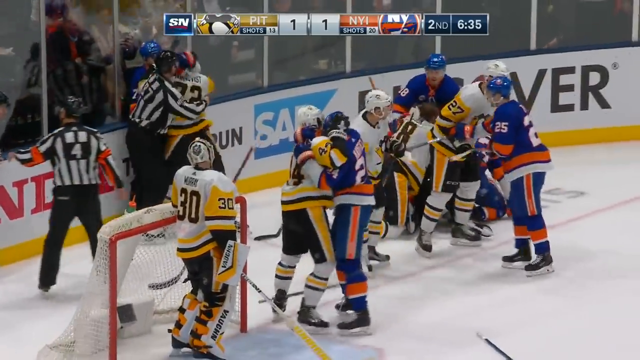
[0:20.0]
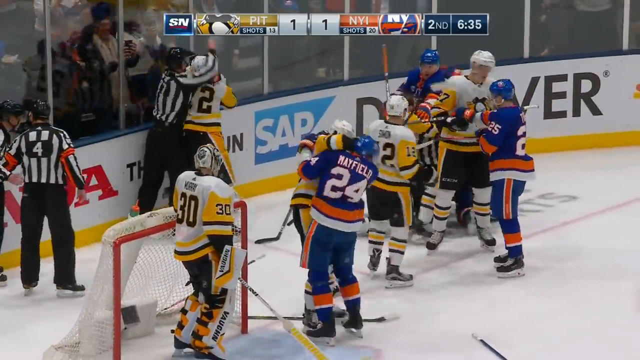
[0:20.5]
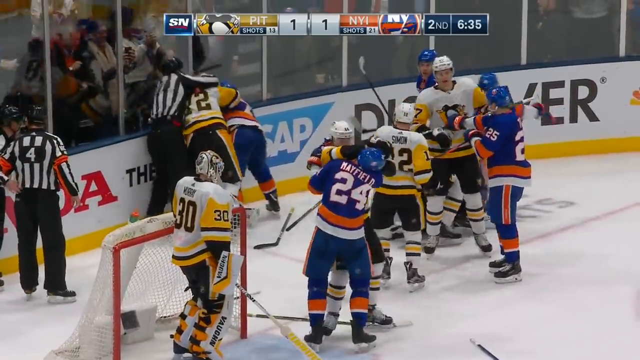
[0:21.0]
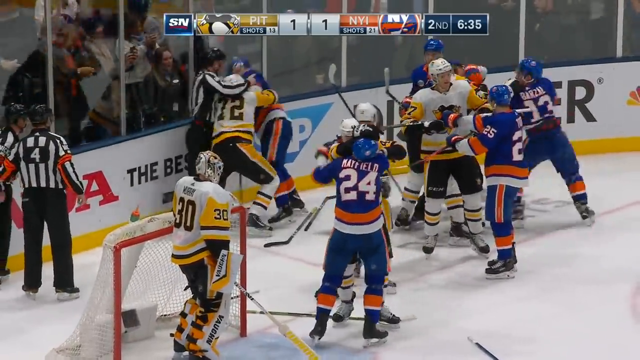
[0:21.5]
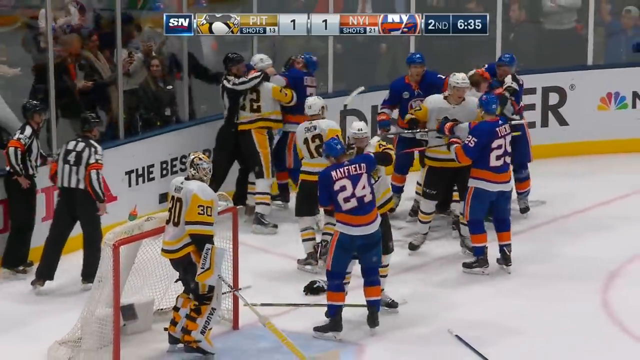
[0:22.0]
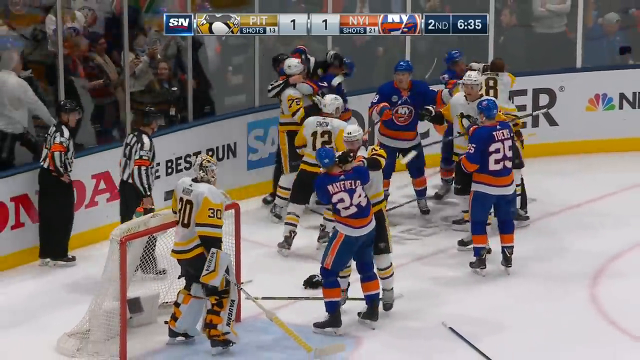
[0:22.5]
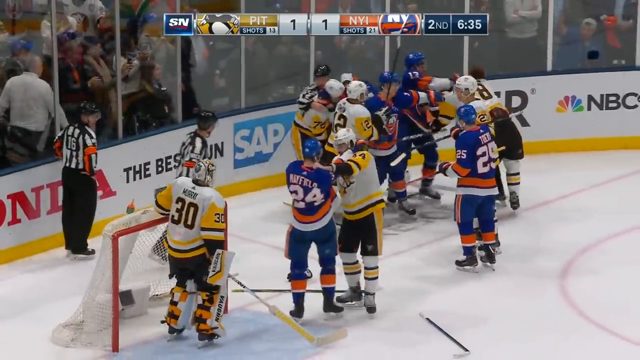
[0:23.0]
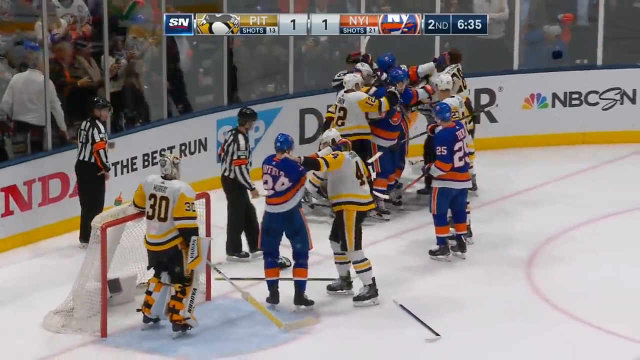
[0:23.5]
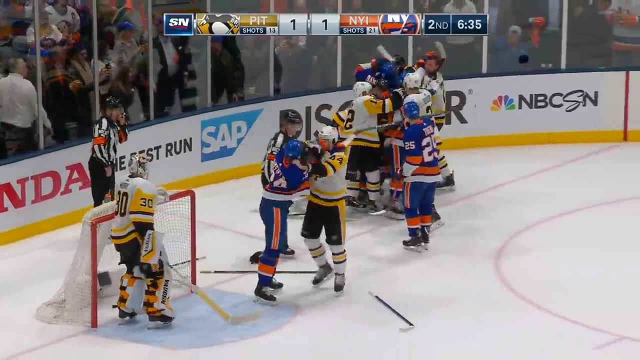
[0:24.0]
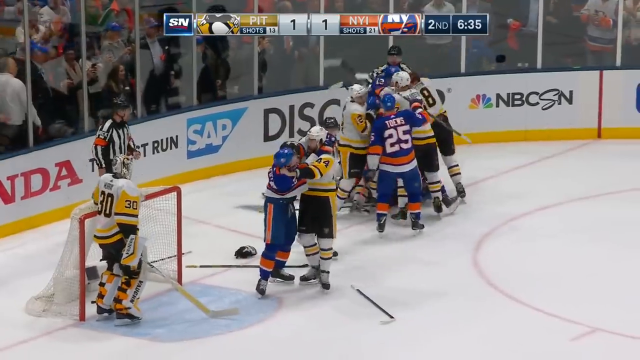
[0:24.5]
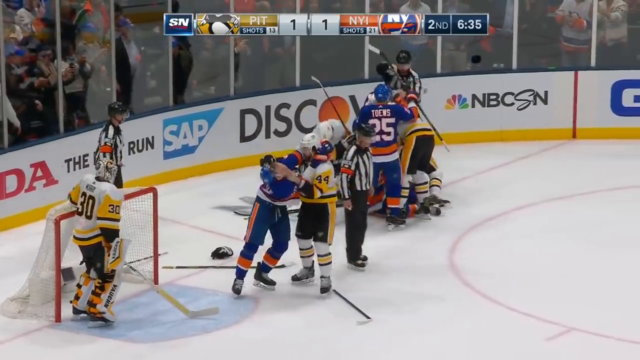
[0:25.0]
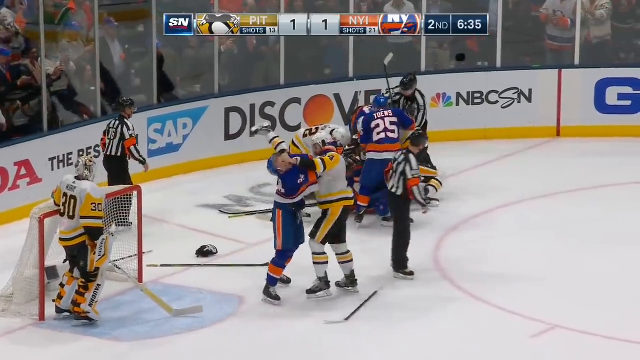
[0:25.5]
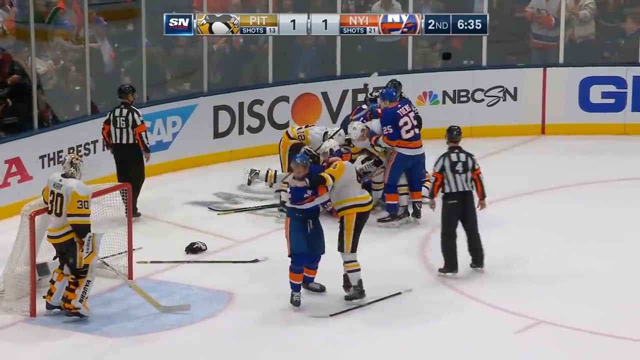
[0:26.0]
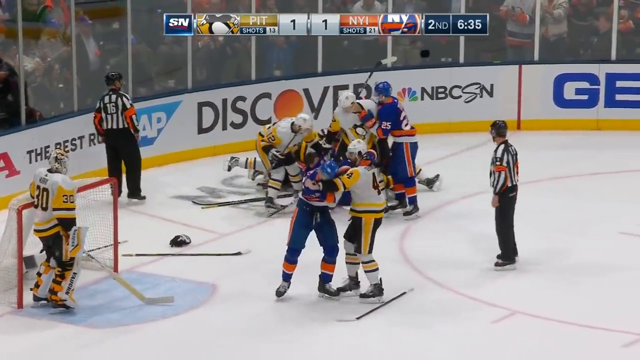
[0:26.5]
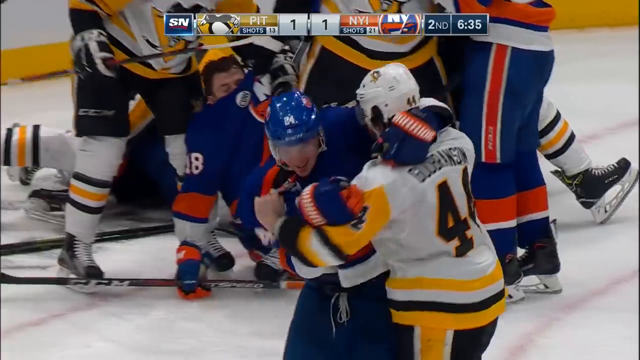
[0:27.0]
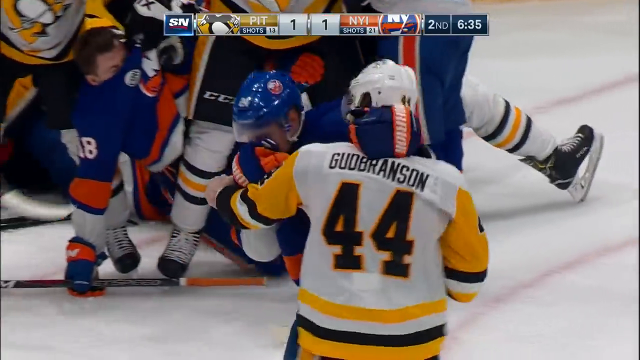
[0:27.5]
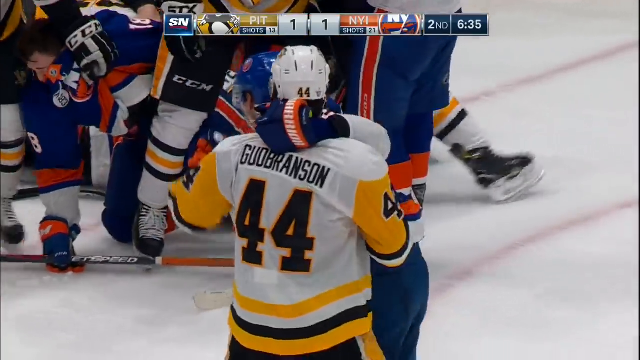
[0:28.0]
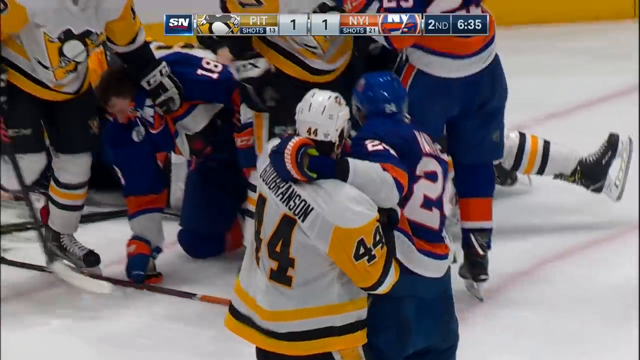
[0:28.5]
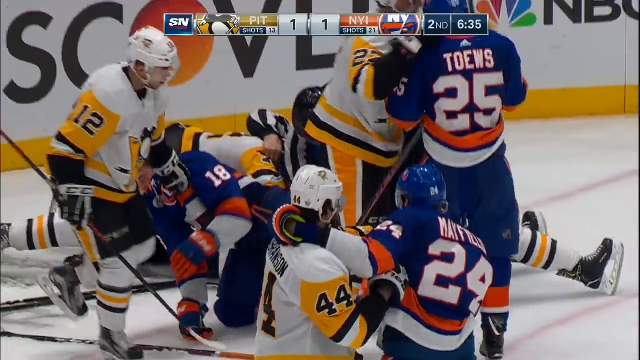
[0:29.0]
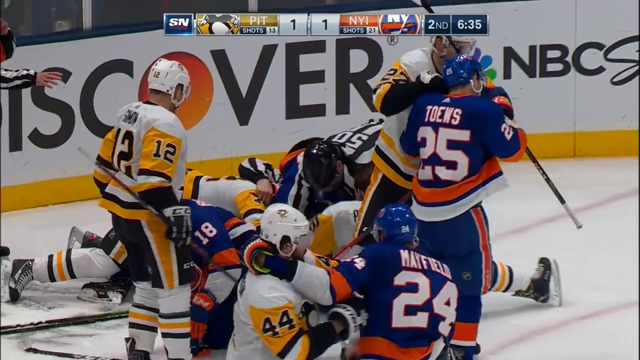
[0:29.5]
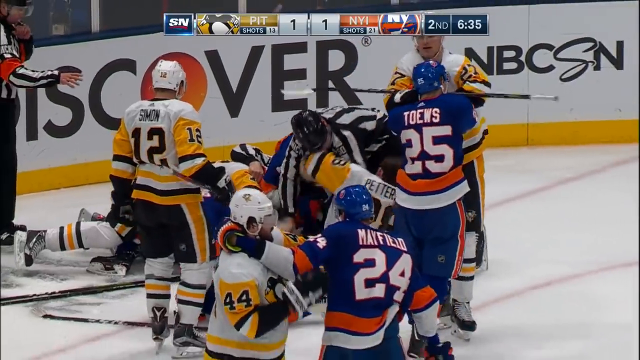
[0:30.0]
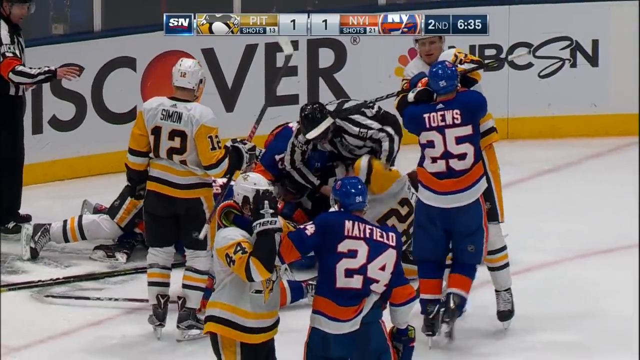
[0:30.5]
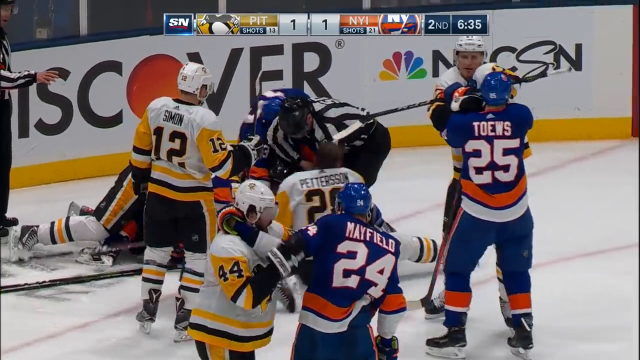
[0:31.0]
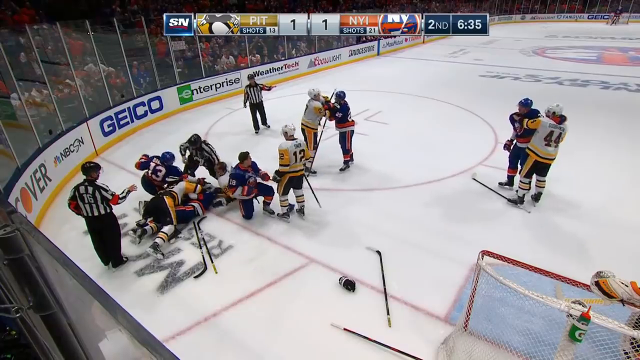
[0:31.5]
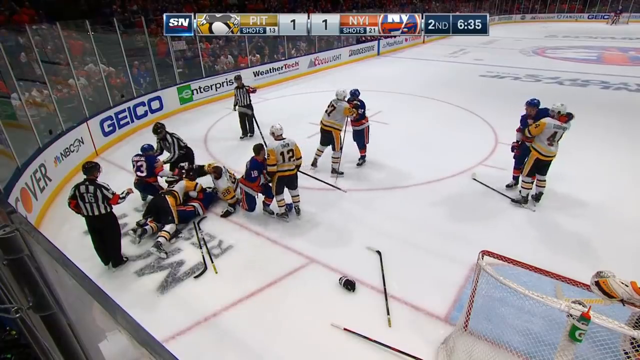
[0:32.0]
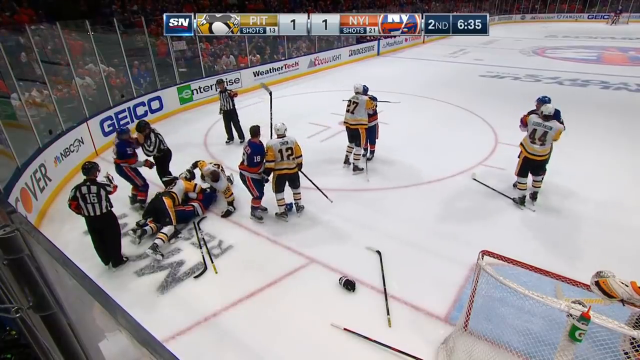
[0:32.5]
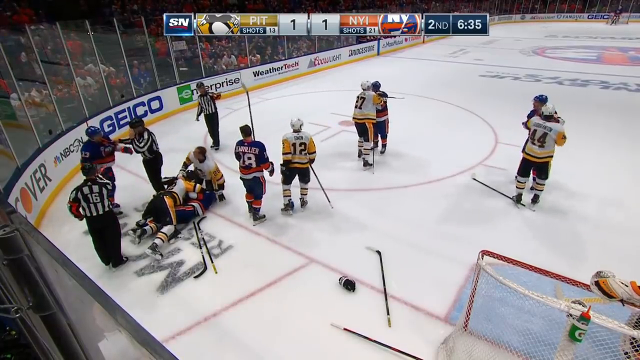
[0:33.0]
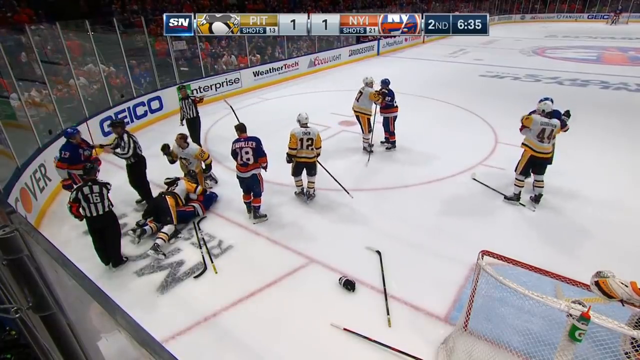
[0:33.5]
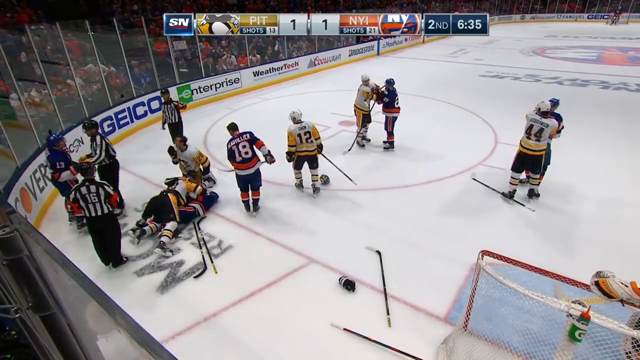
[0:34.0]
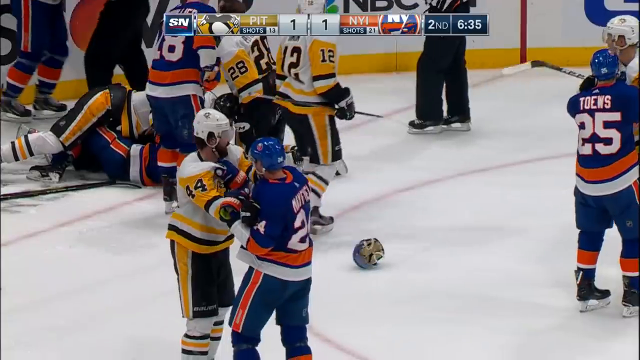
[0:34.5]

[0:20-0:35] Multiple pairs of players from each team are intertwined with each other. The referees go around letting everything play out. Some players have had their helmets taken off, while others are getting up. The officials get in there to kind of separate everyone. The game appears to be played in a large arena, most likely an NHL arena. Along the wall of the ice rink are sponsors, including SAP, Discover, NBCSN, Geico, Enterprise and WeatherTech, with more along the way. As the camera changes angles, a large orange logo on the ice rink suggests this is most likely the Islanders' arena; the logo is hard to see, but it doesn't appear to be in the Penguins' colors.